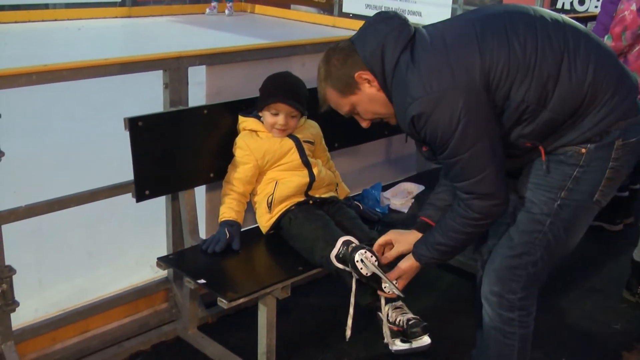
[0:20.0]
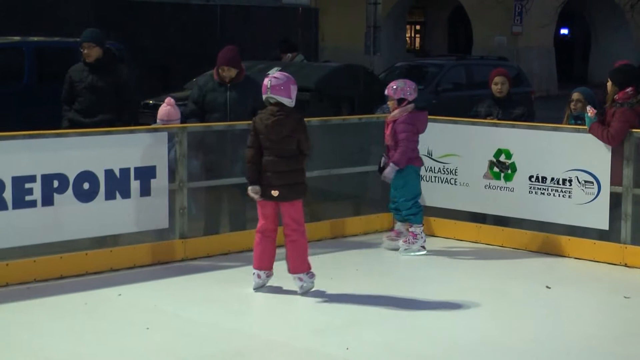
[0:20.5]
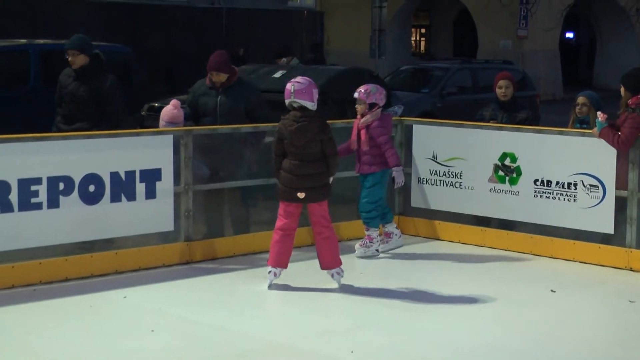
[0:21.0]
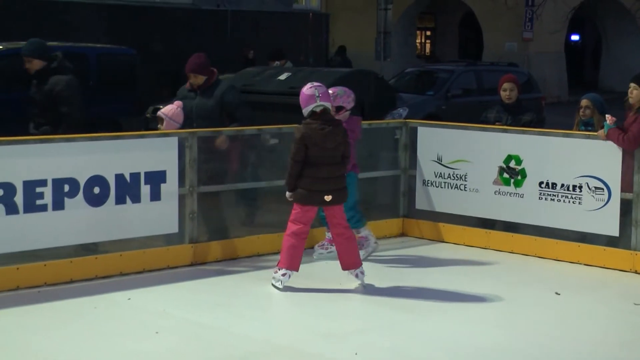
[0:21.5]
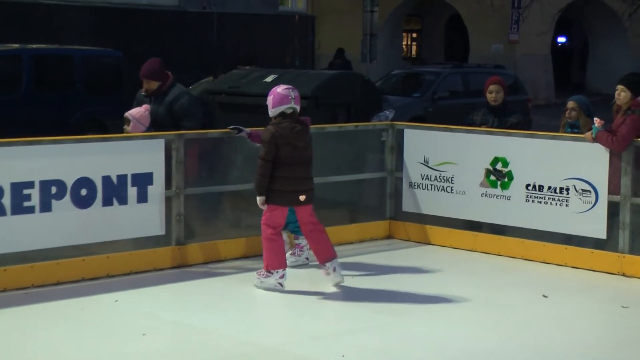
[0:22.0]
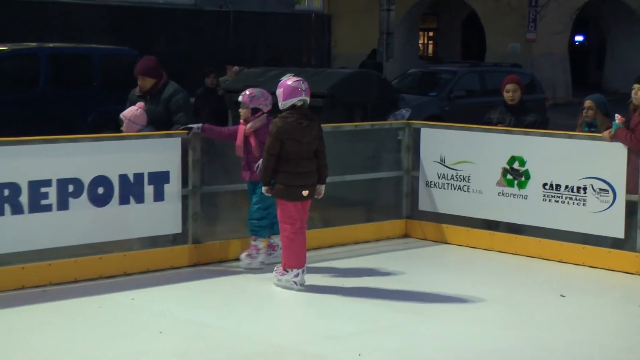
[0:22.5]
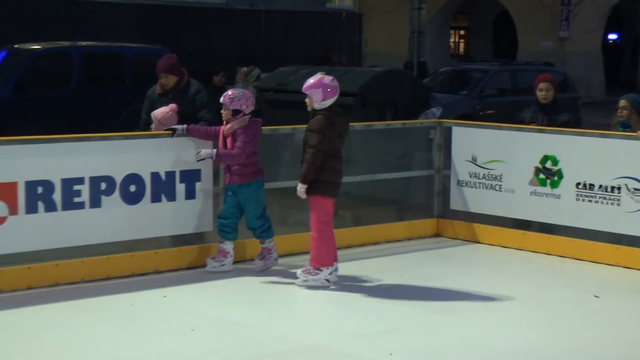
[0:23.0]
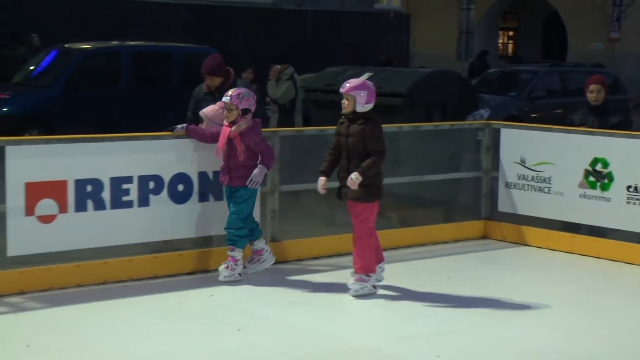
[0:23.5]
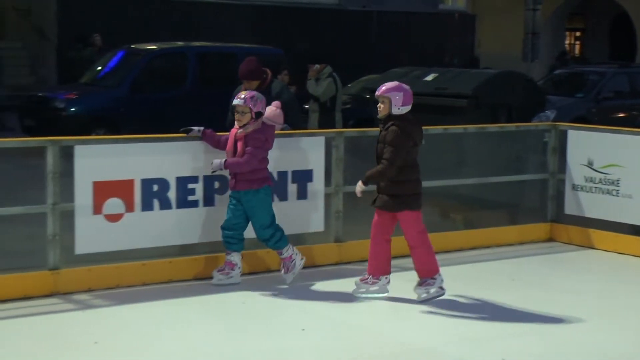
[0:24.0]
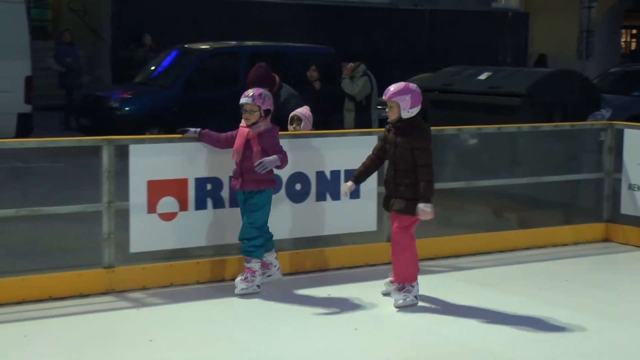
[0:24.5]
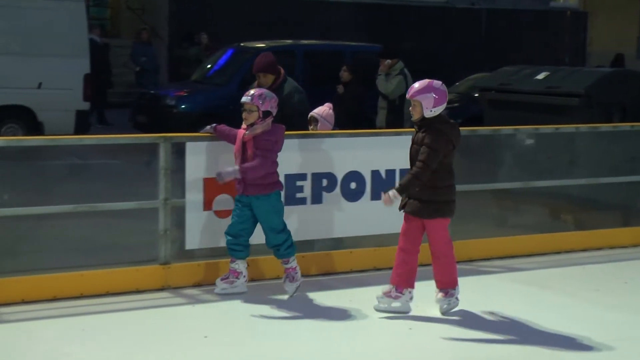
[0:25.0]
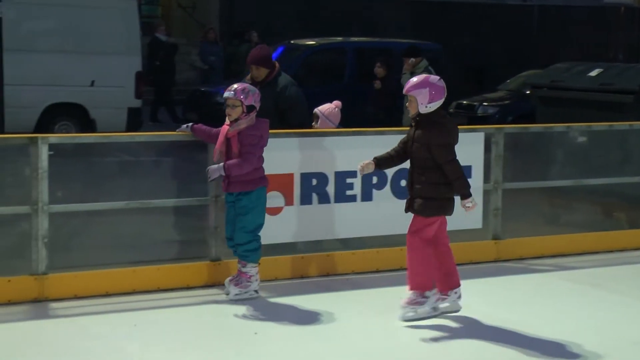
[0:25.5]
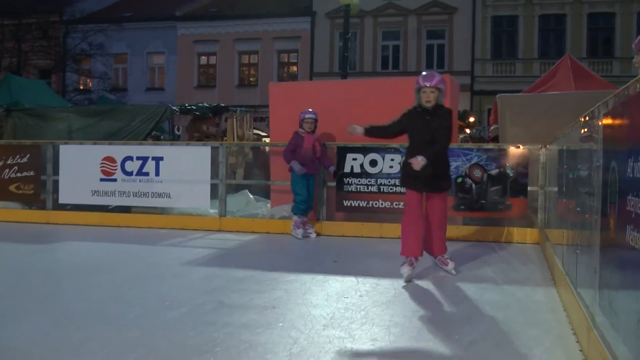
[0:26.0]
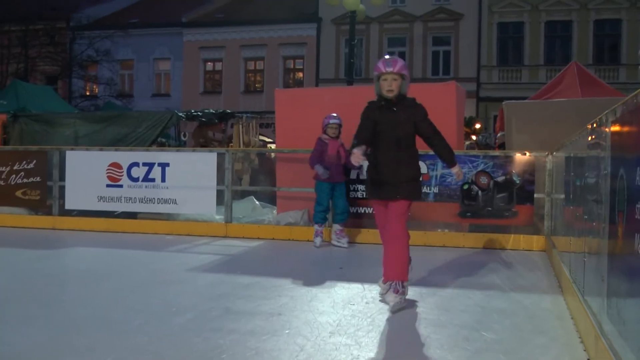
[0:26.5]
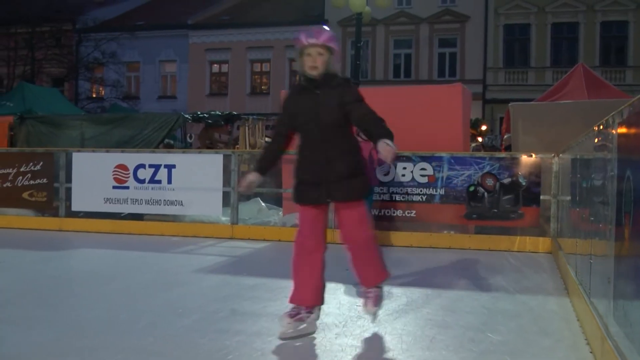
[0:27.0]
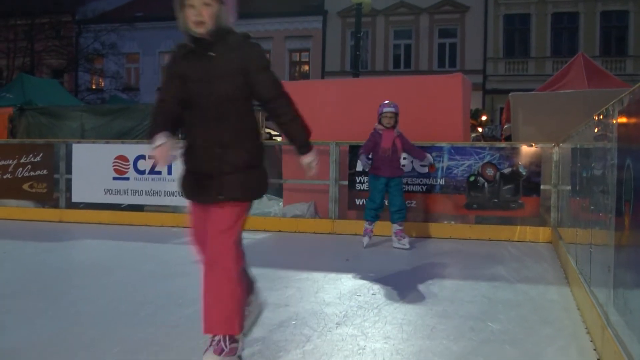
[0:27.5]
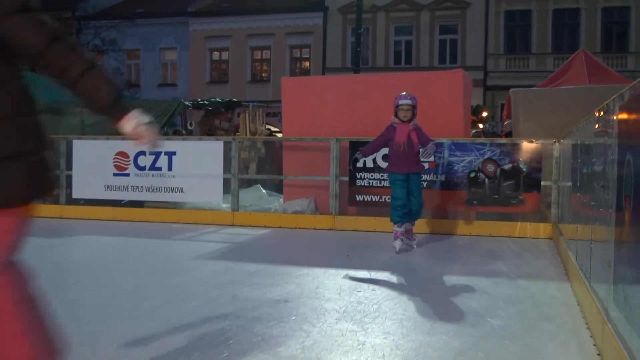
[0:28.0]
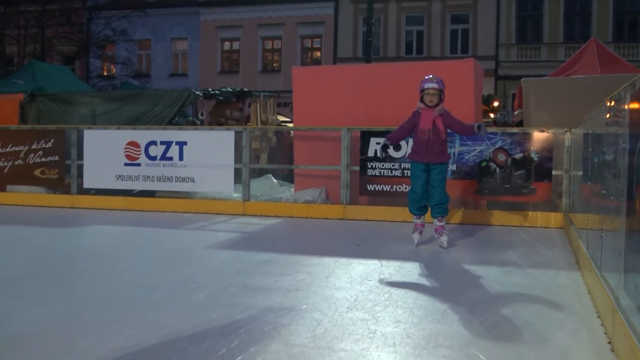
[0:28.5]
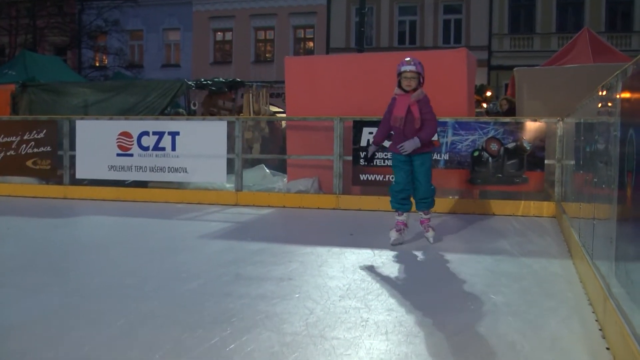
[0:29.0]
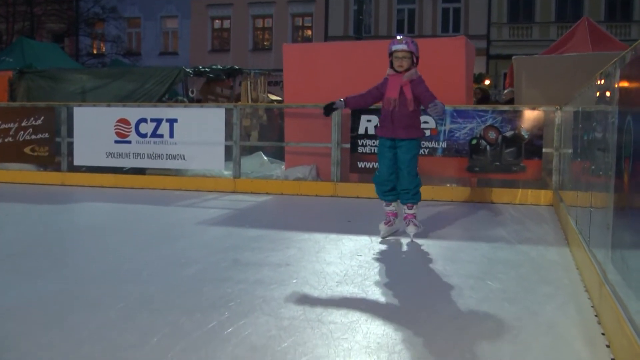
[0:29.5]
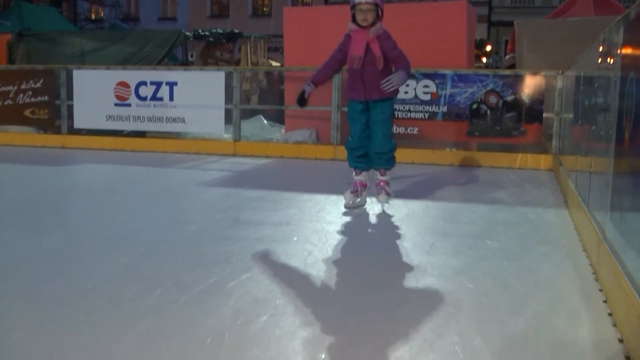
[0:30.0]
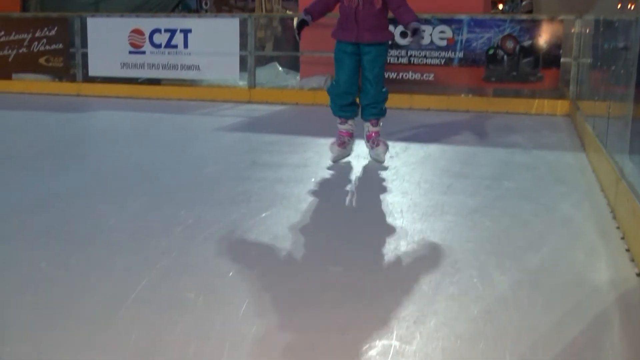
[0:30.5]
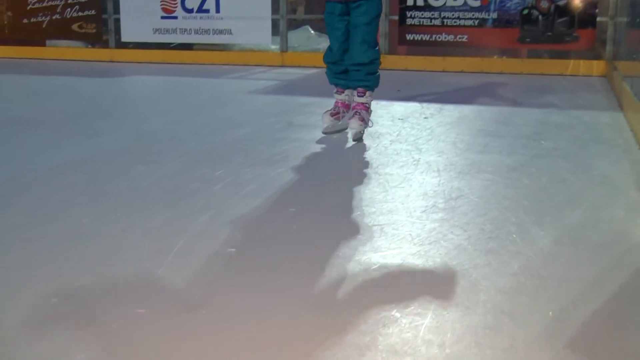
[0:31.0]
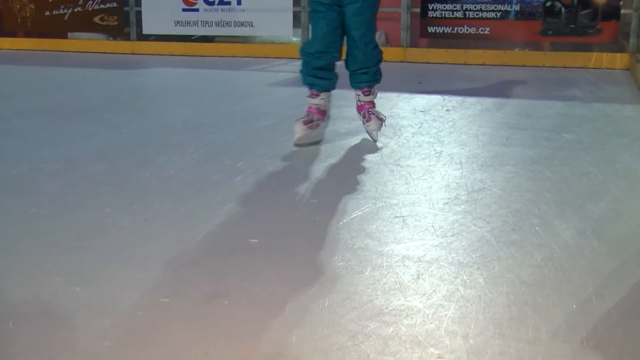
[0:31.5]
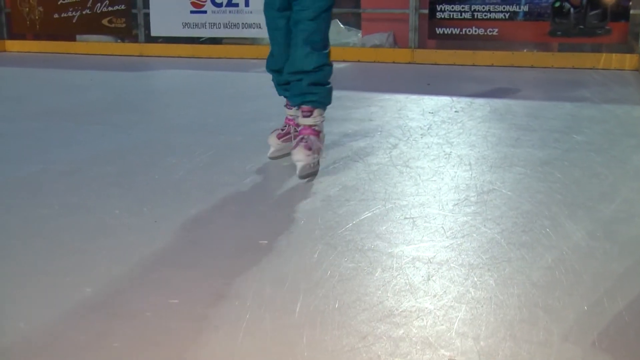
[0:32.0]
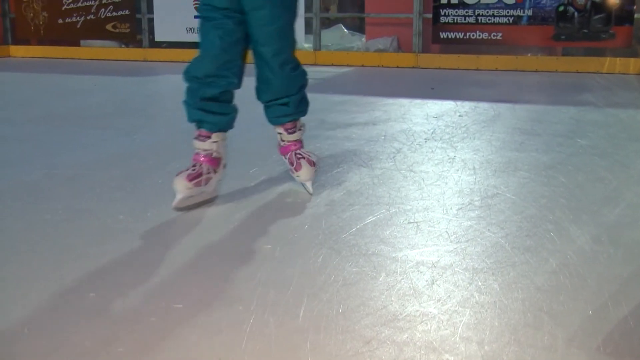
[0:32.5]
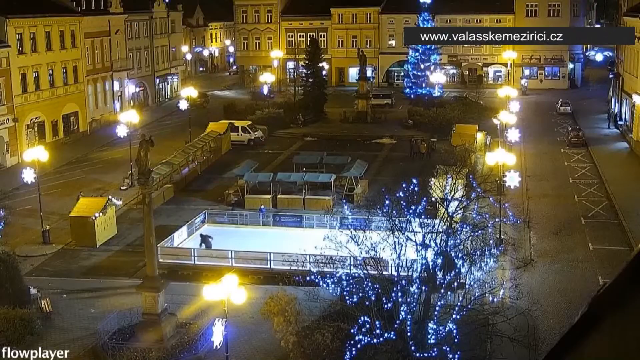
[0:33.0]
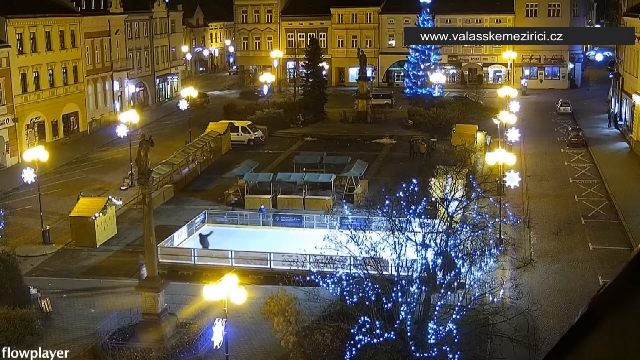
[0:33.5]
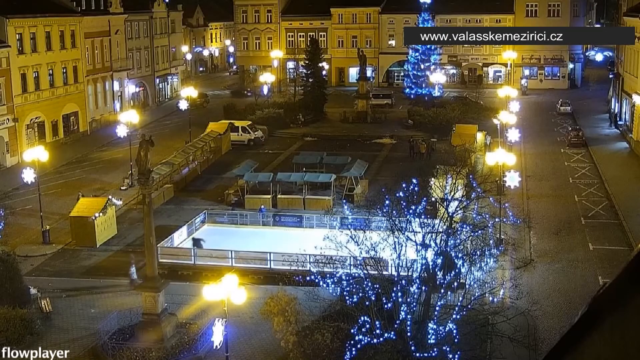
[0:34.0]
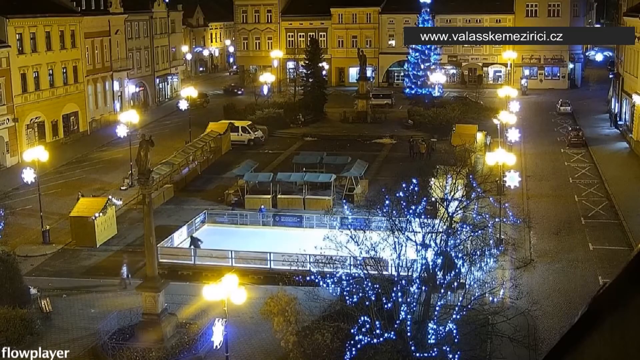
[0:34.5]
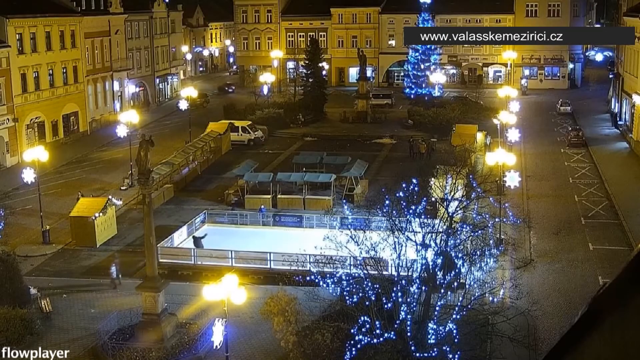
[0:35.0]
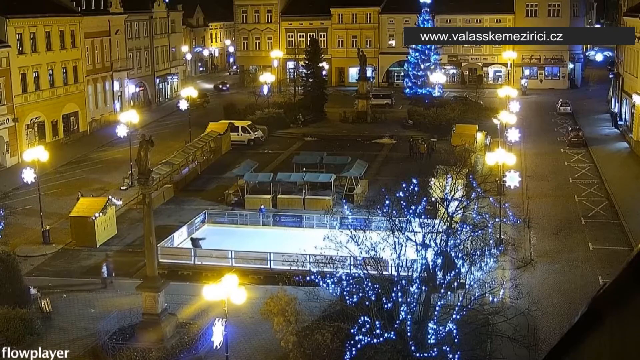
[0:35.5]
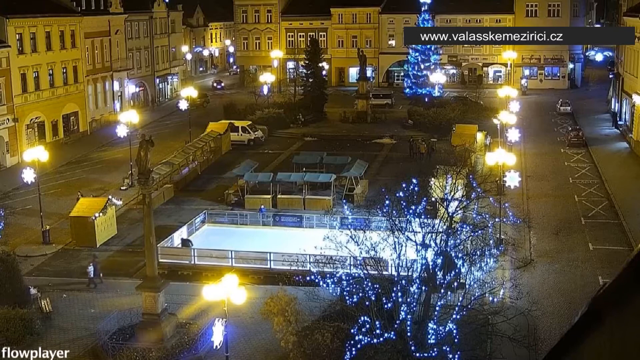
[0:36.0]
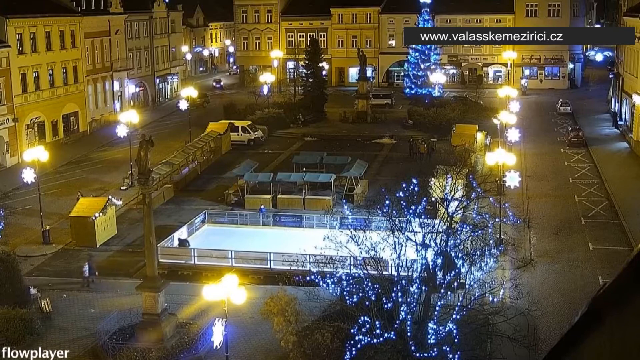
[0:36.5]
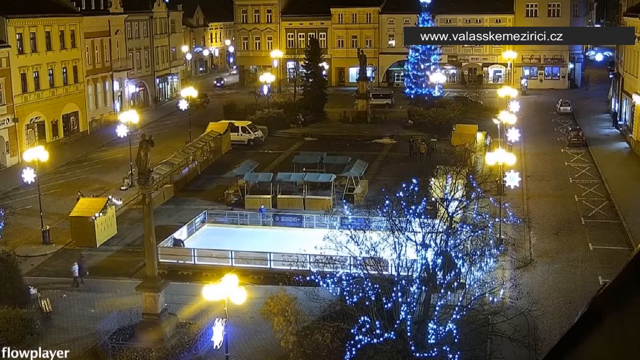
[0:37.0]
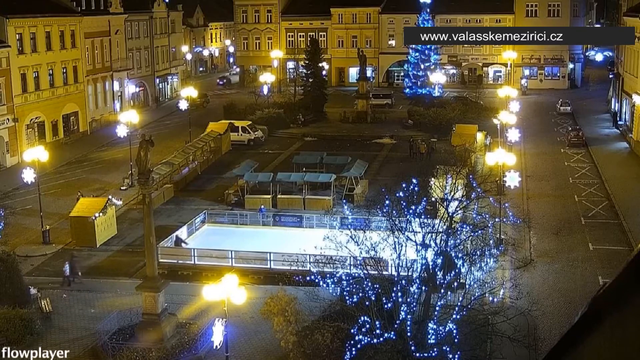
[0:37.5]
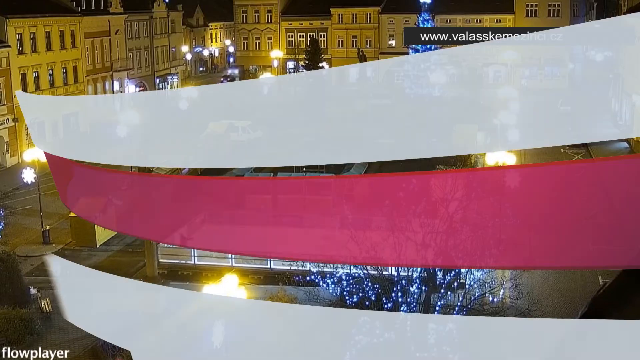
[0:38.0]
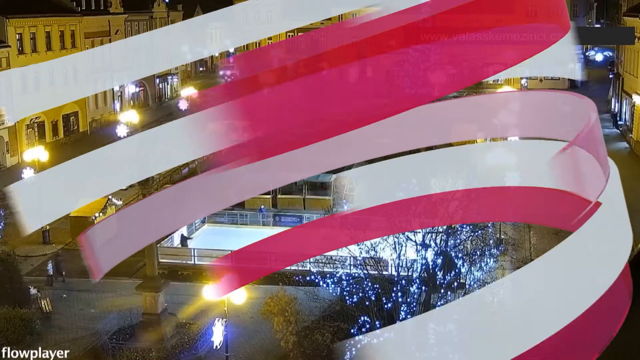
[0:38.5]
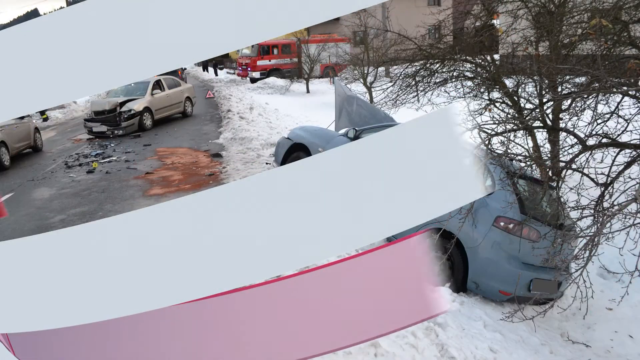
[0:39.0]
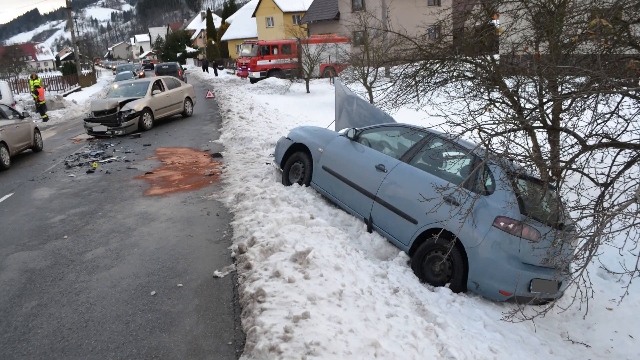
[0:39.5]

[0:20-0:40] A man puts ice skates on his little boy, who looks younger than four, or possibly four. Then some girls are at an ice skating rink; one girl holds on to the side, basically walking, and skates. A website suddenly appears on screen: "www.VlaskeMaserieC.cz". The setting is a town square with an ice rink in the middle, and it looks like Christmas: there is a big outdoor Christmas tree and some star lights hanging from poles or something similar. The lines go by again, and a car that has gone off the road appears.